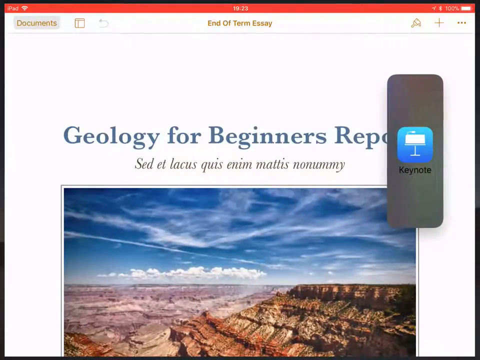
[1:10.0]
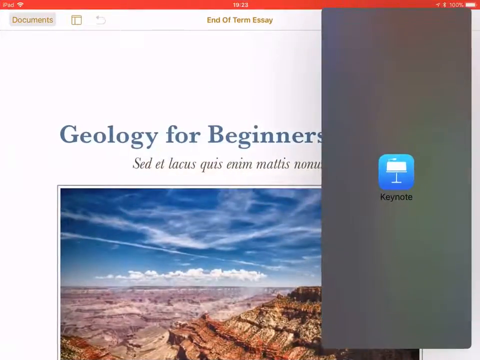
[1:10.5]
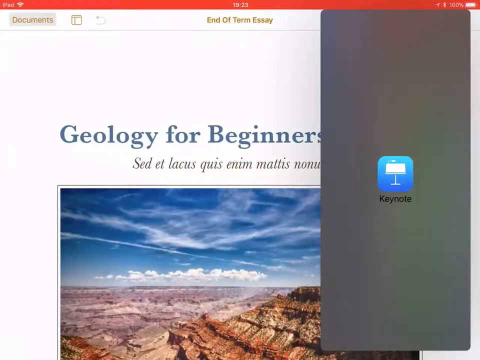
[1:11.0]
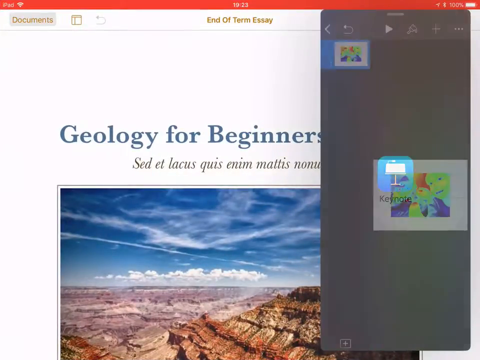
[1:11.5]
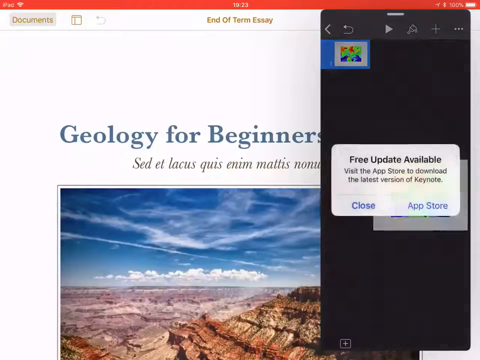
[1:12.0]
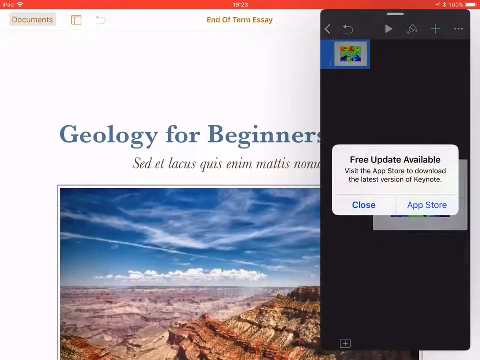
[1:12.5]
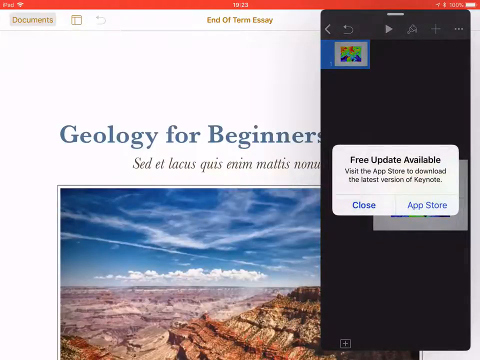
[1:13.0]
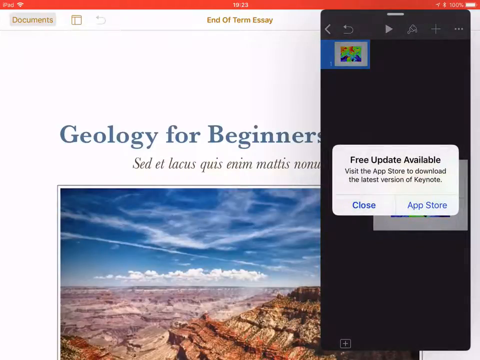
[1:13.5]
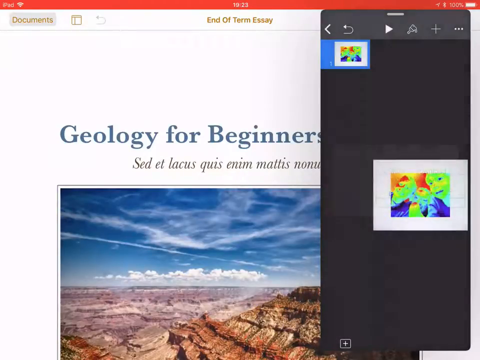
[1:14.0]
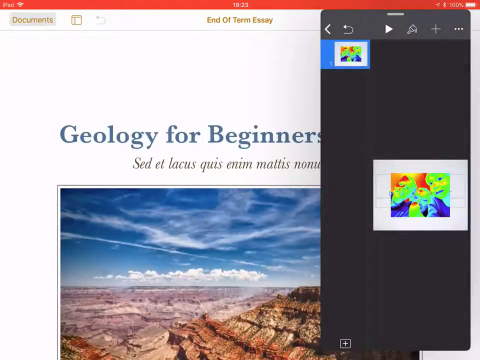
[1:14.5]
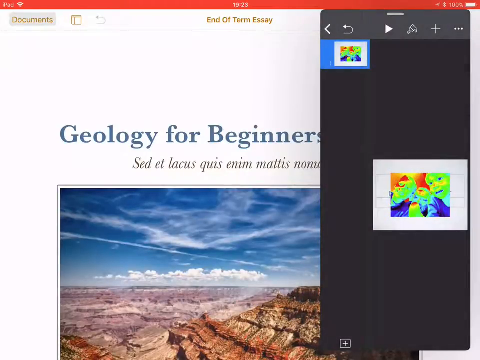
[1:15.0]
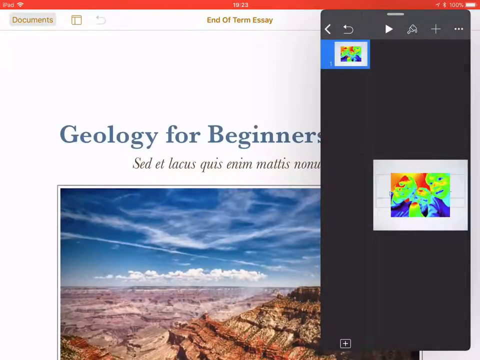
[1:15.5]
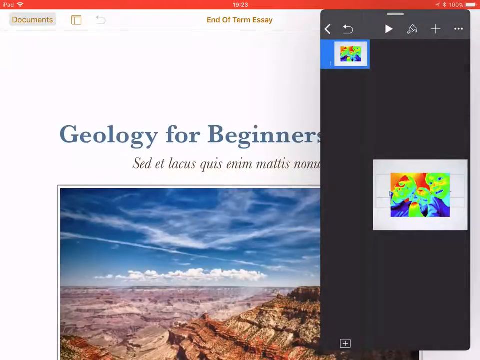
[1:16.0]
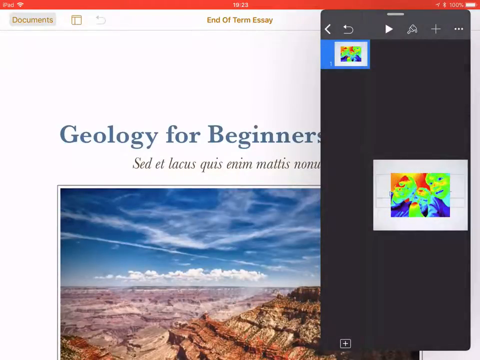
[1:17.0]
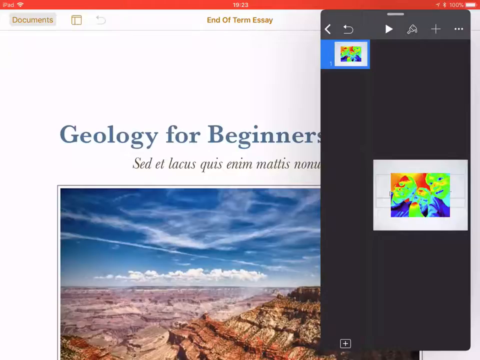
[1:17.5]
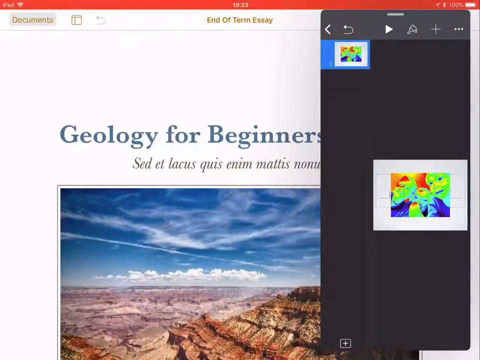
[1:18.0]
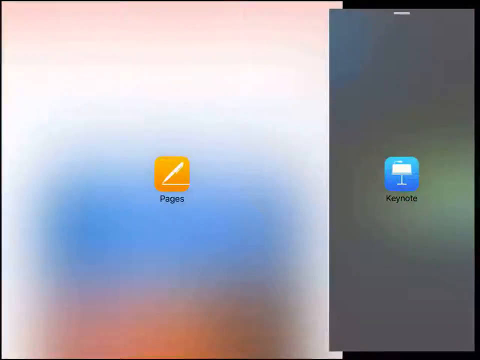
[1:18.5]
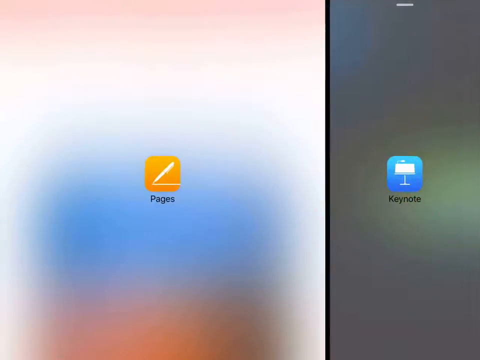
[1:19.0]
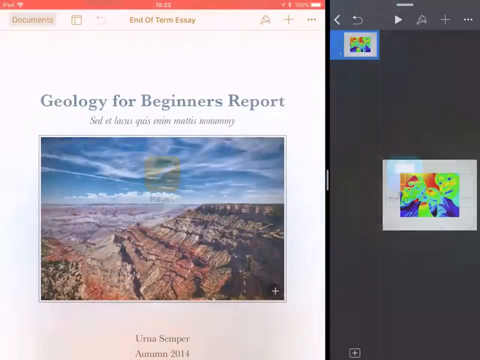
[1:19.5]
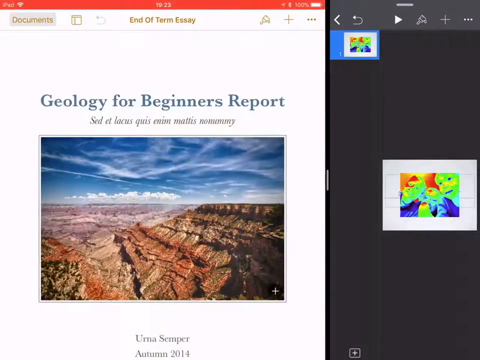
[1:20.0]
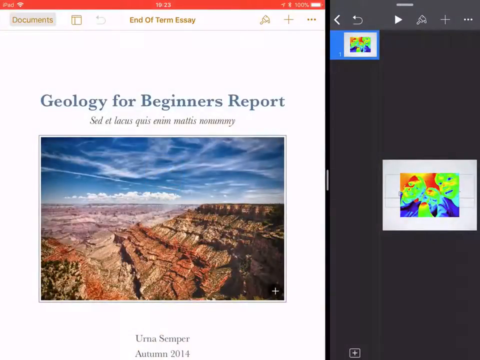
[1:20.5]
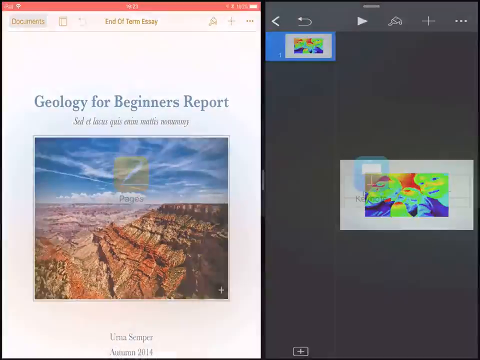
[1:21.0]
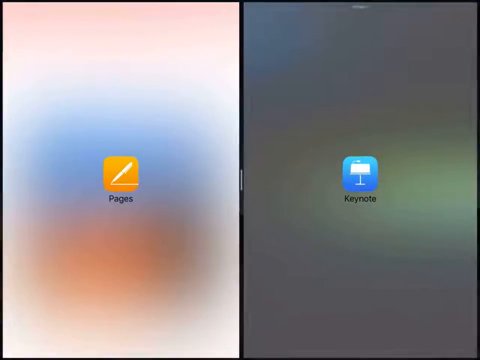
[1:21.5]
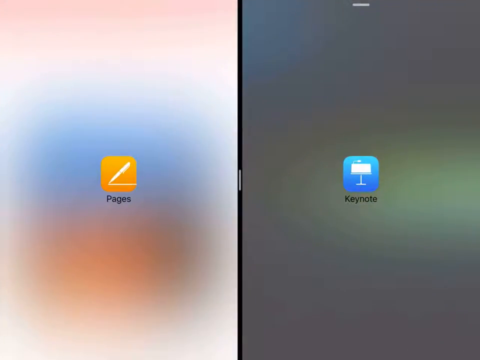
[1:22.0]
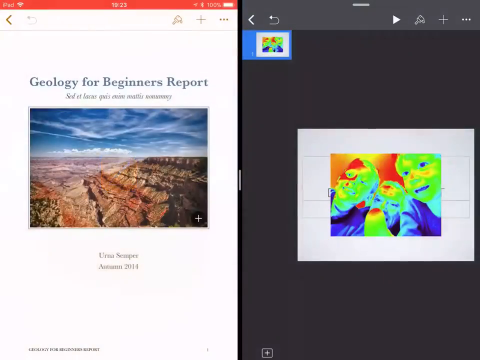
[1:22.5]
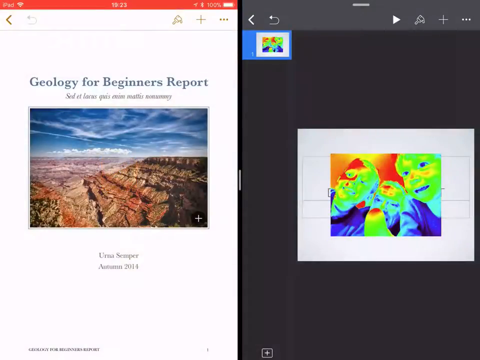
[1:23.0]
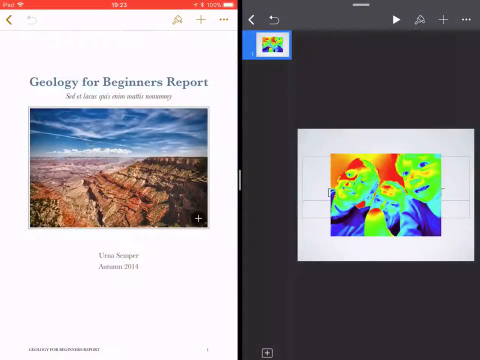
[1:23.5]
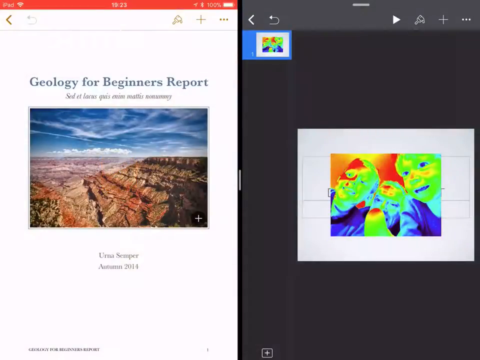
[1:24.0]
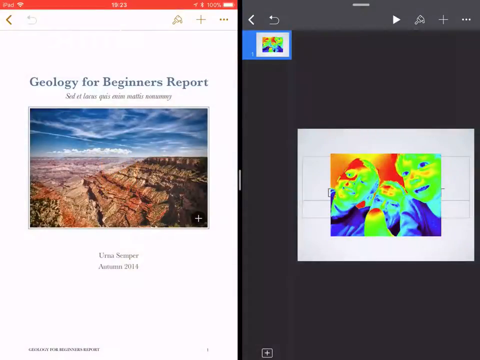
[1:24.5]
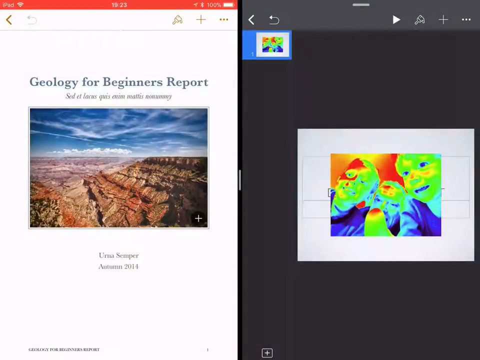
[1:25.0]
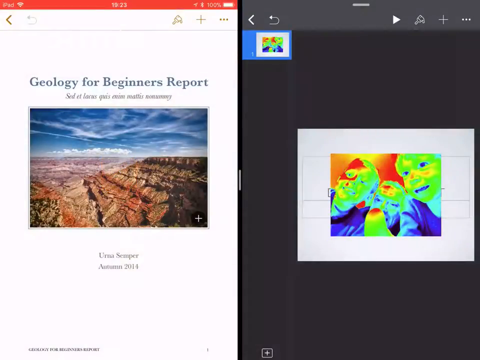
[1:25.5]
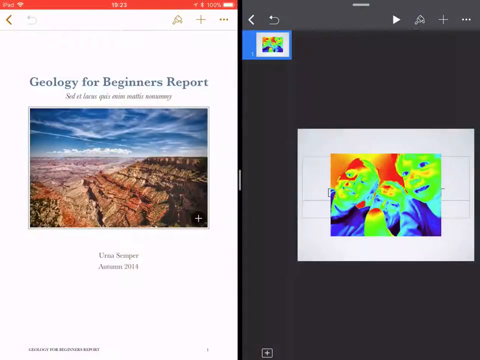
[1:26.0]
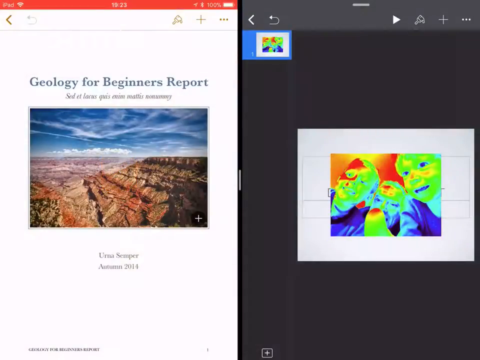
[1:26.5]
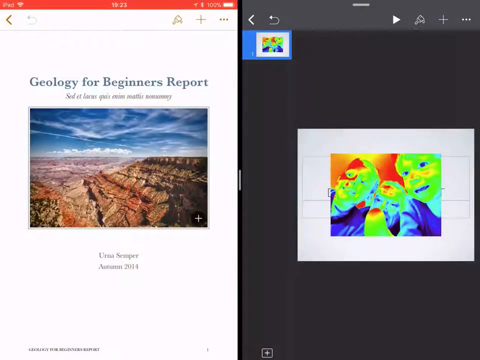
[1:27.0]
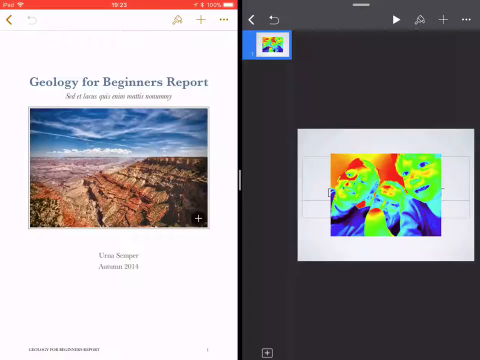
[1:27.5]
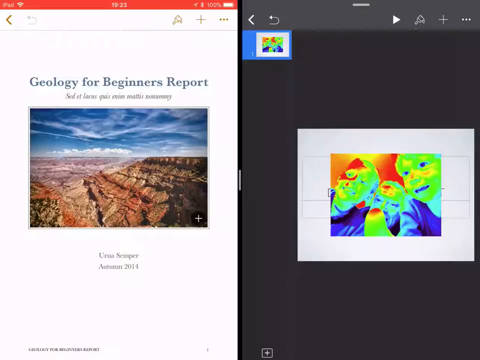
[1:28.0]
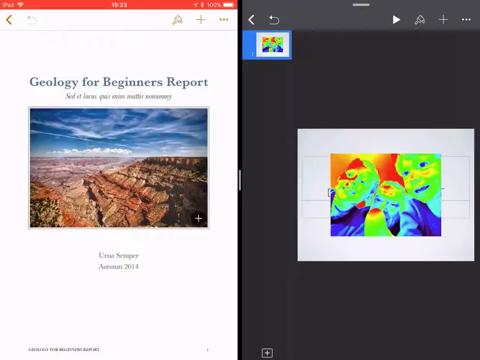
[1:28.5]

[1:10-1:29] Once Keynote is released onto the web browser page, the screen automatically splits in two: Keynote opens on the right side, and the web browser page on the left side adjusts to fit. Images and text from the web page on the left can be copied into Keynote on the right.